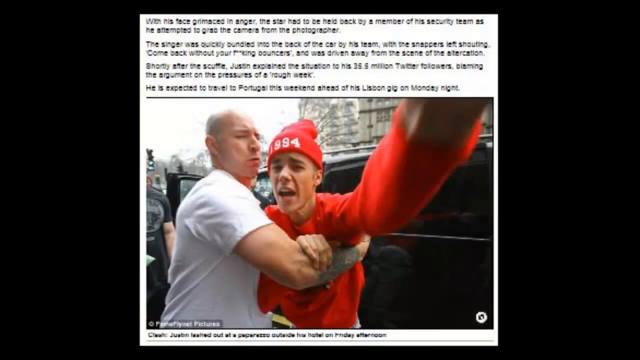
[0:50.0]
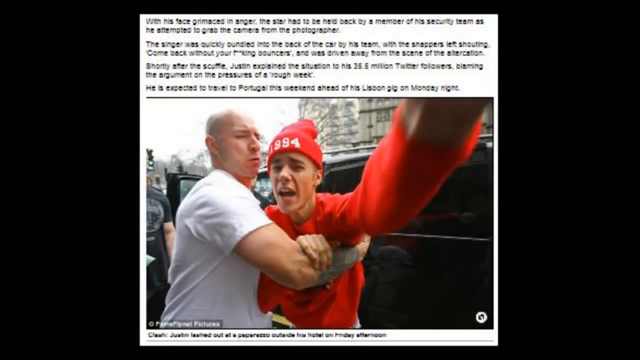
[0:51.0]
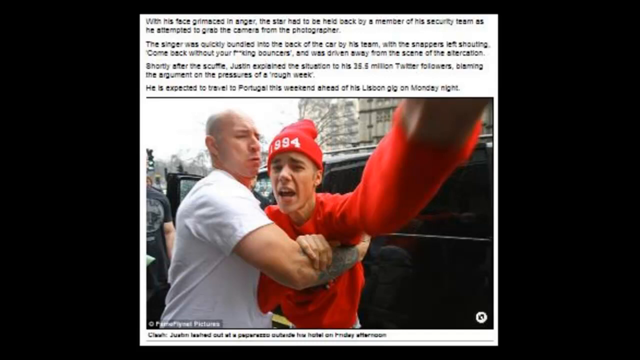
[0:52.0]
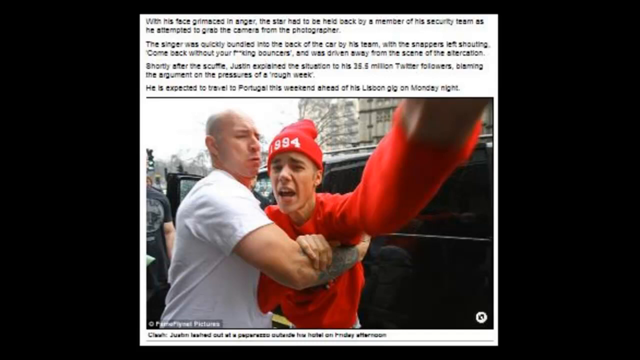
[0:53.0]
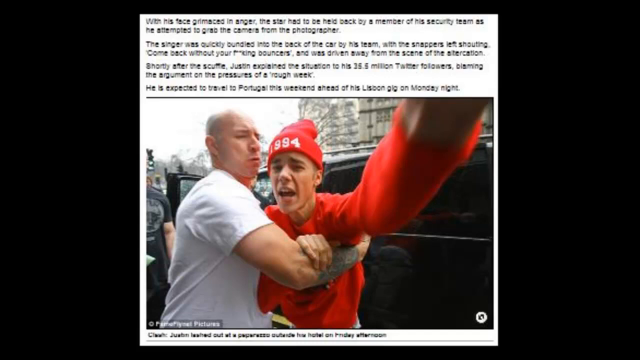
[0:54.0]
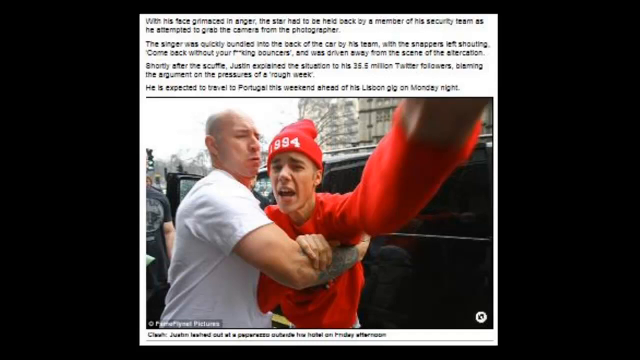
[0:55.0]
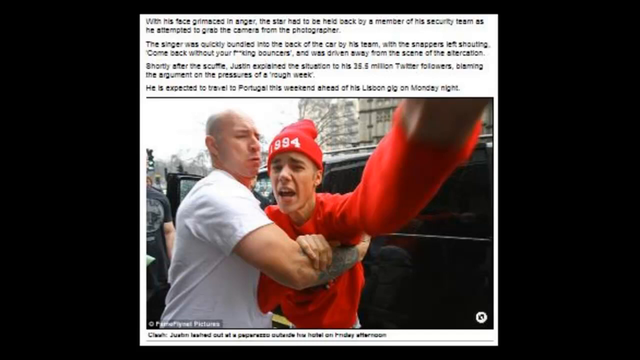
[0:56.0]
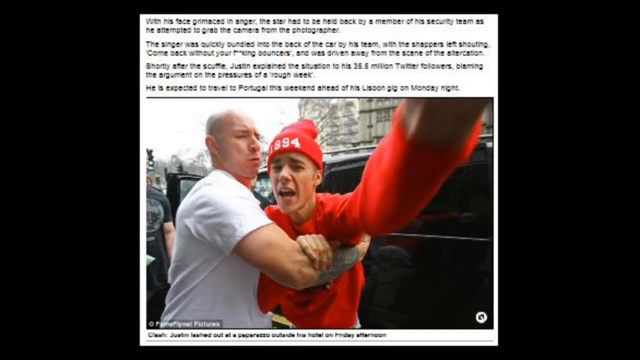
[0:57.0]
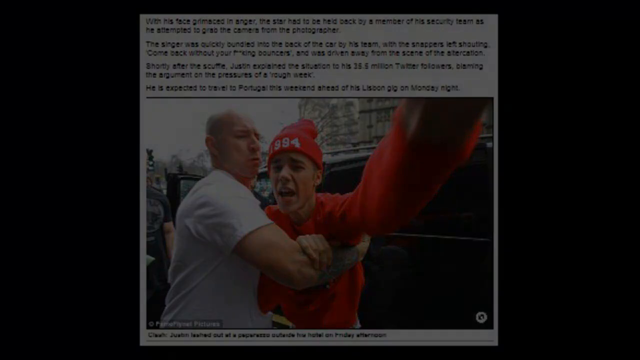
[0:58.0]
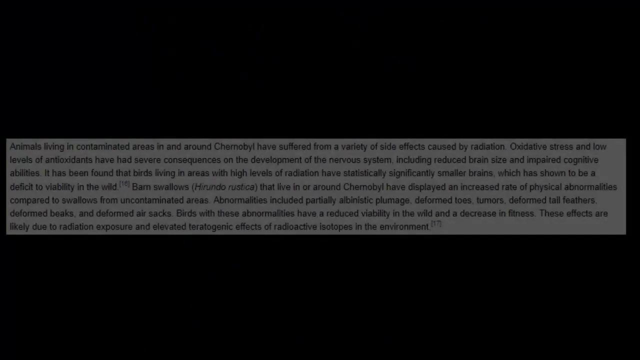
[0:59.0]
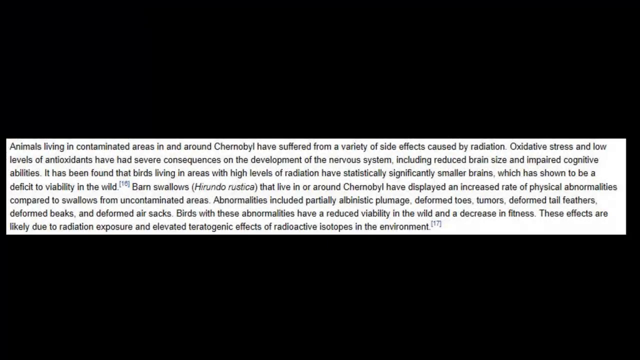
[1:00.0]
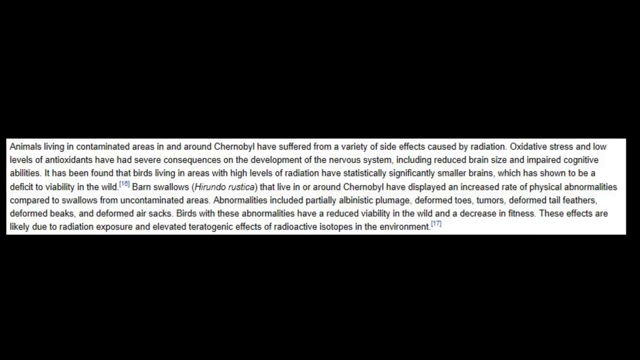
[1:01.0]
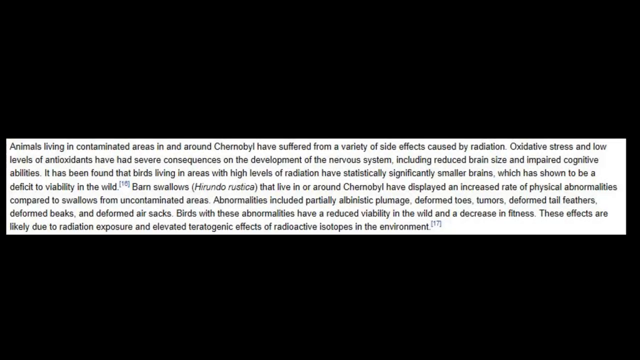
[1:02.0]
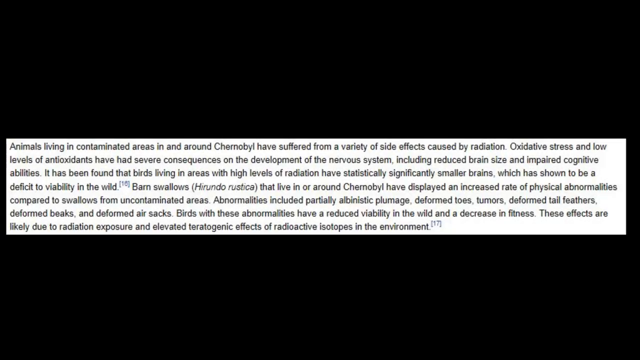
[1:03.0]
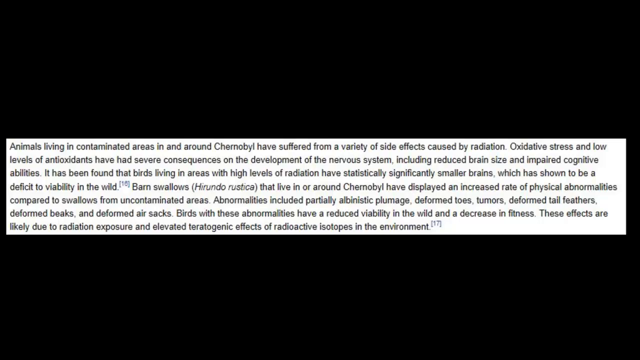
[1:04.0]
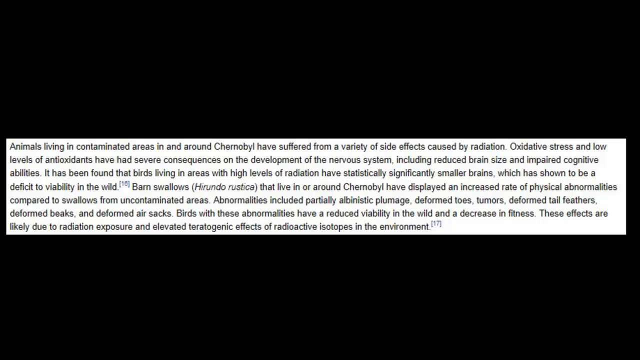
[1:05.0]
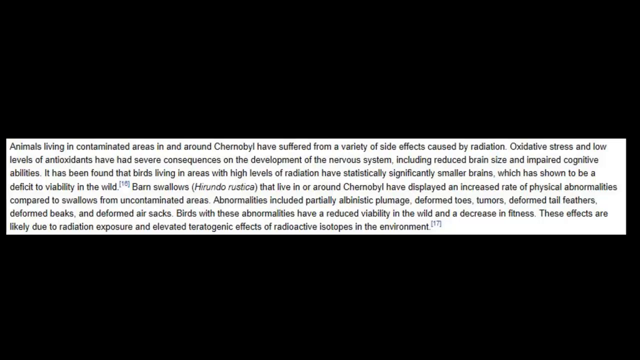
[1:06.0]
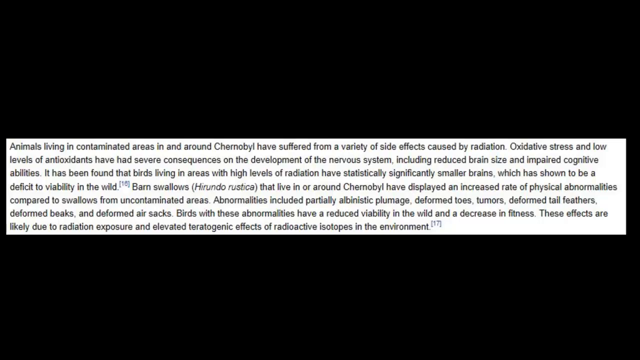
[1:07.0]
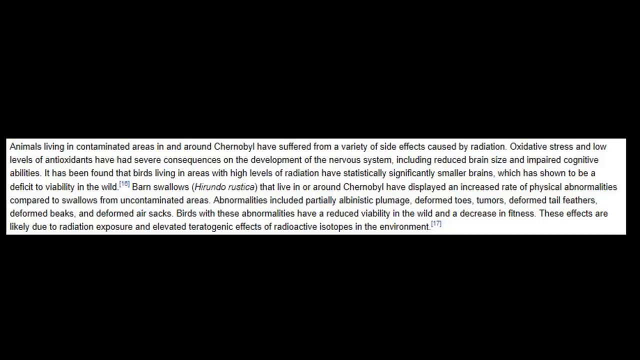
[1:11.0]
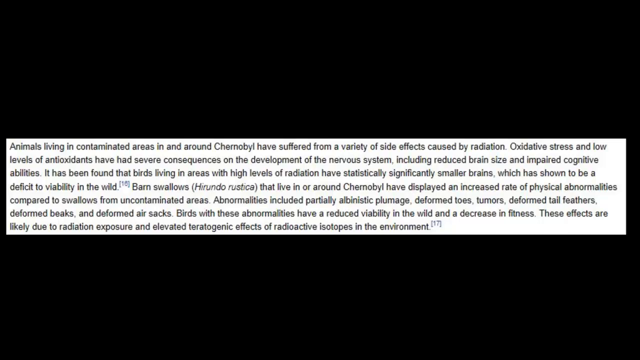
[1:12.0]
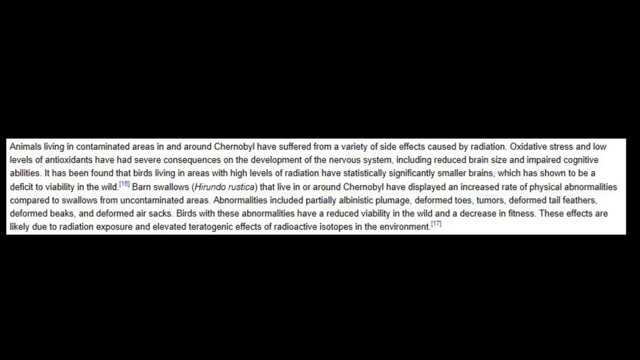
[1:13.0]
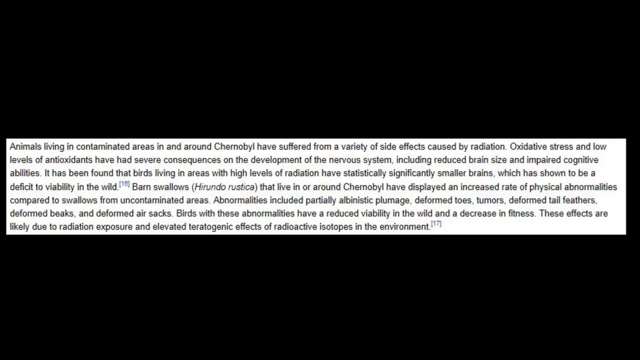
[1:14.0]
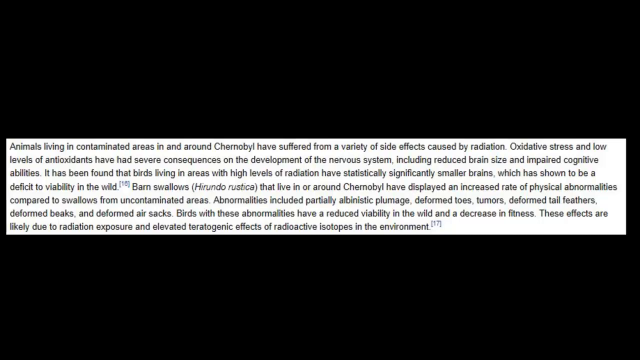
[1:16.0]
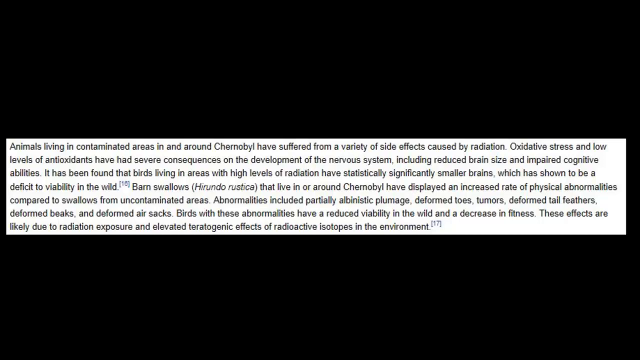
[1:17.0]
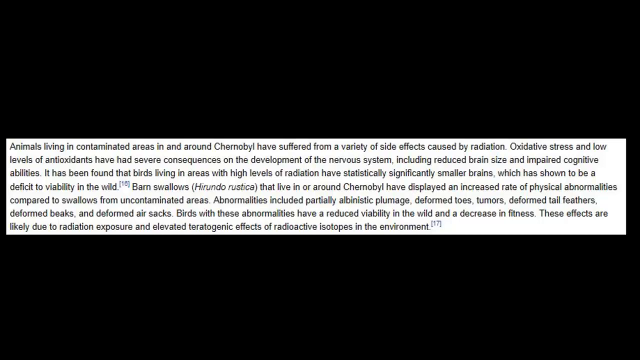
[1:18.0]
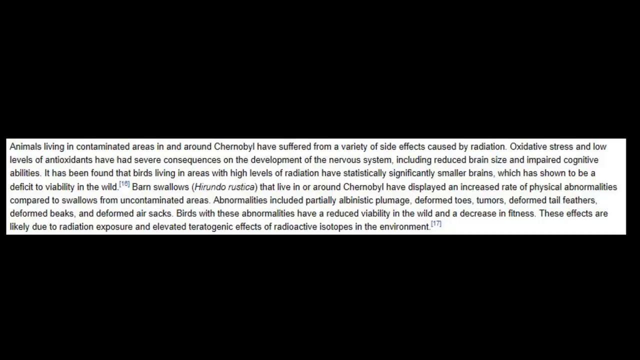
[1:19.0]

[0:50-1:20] Justin Bieber, wearing a red shirt and a red hat, is being held back by an elderly man who is trying to stop him. There is a lot of text on the screen, black and gold on a white background, placed between two black stripes at the top and bottom. He appears angry at the people surrounding them, who are trying to get photos and videos.